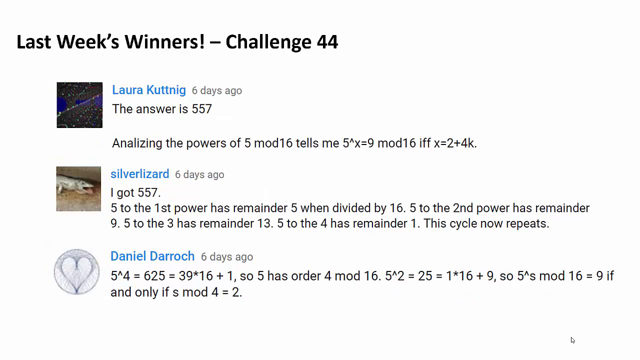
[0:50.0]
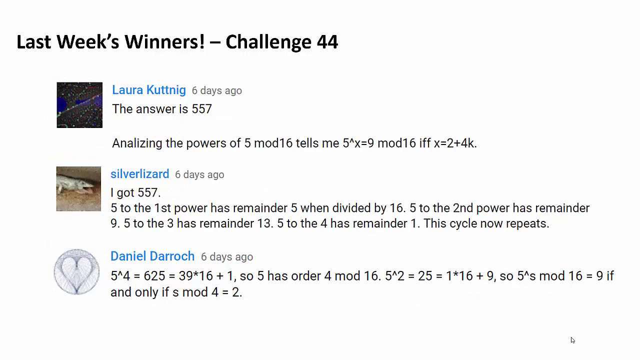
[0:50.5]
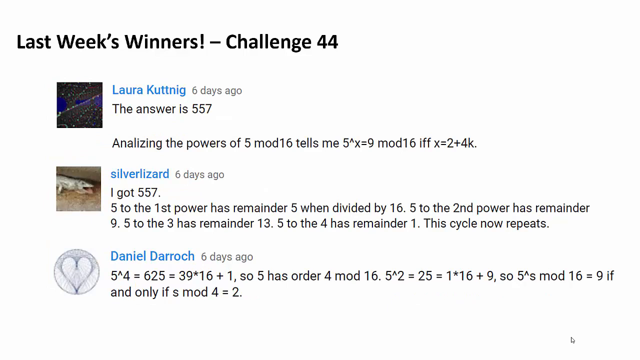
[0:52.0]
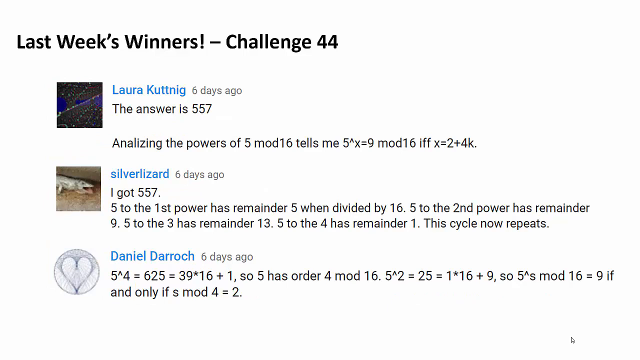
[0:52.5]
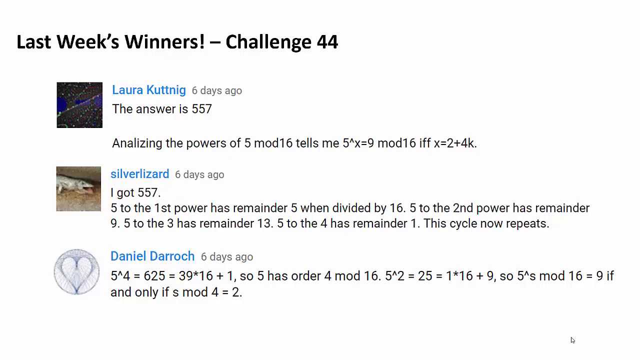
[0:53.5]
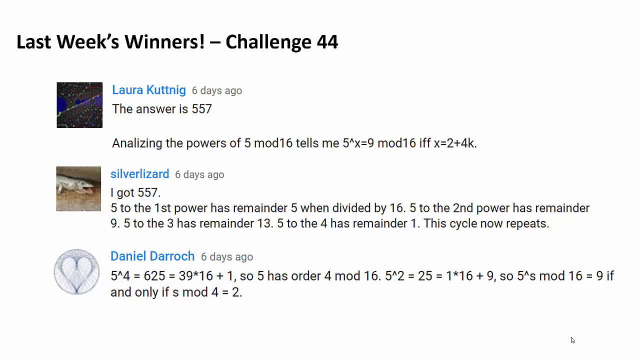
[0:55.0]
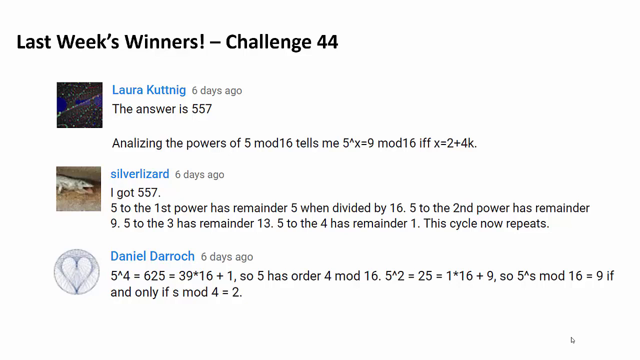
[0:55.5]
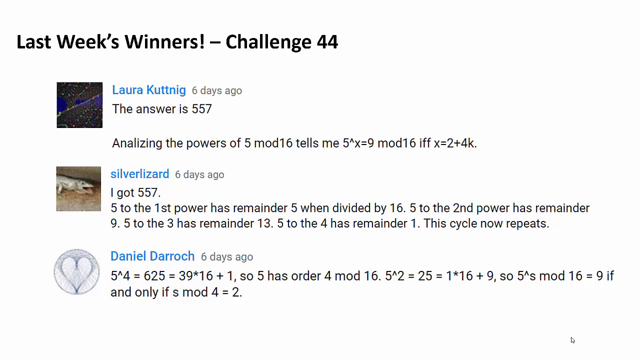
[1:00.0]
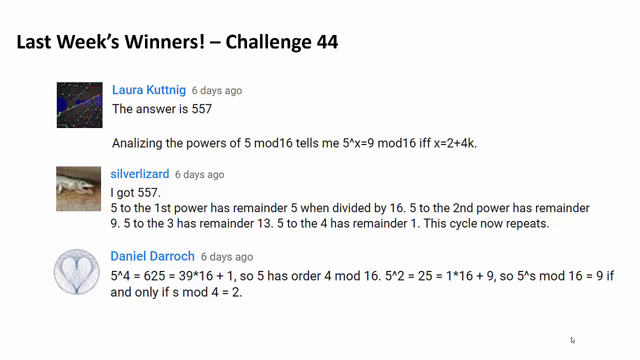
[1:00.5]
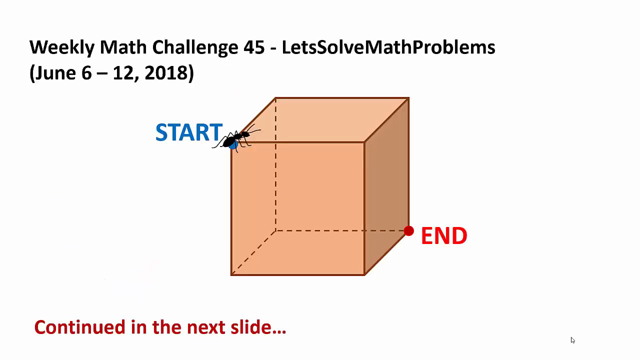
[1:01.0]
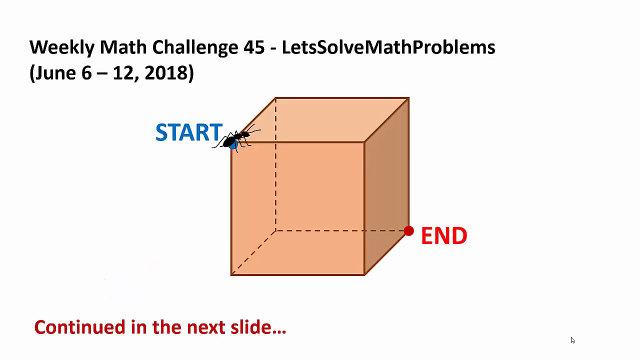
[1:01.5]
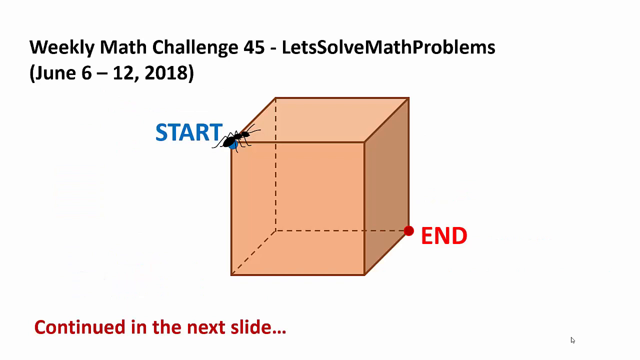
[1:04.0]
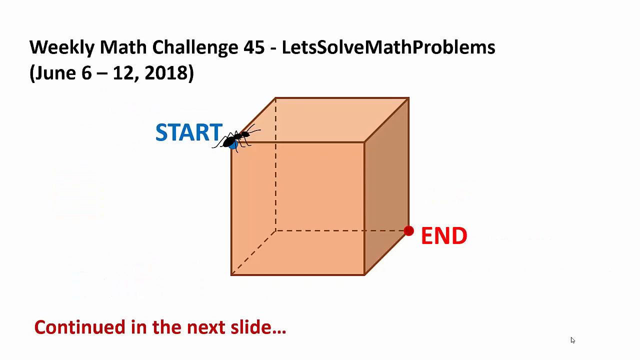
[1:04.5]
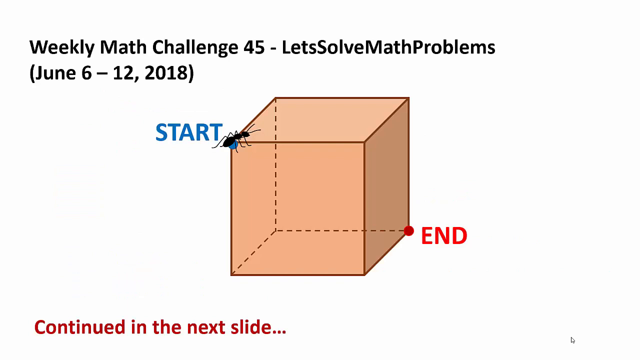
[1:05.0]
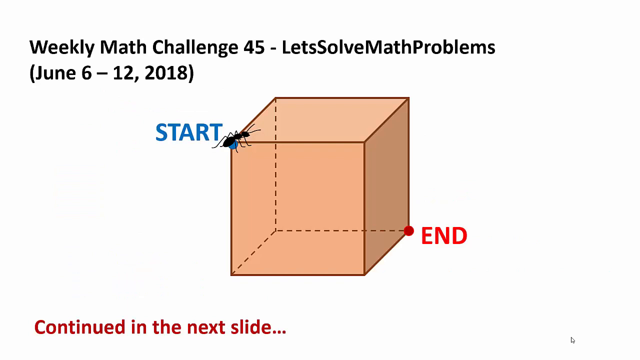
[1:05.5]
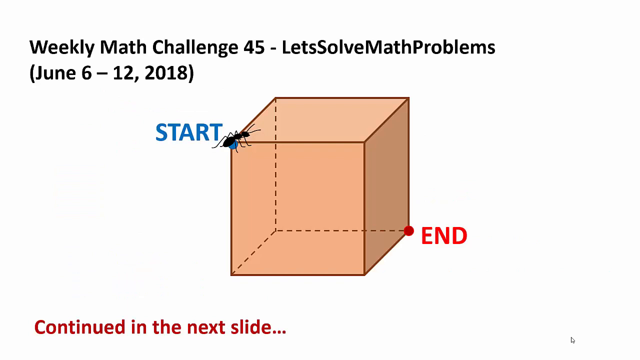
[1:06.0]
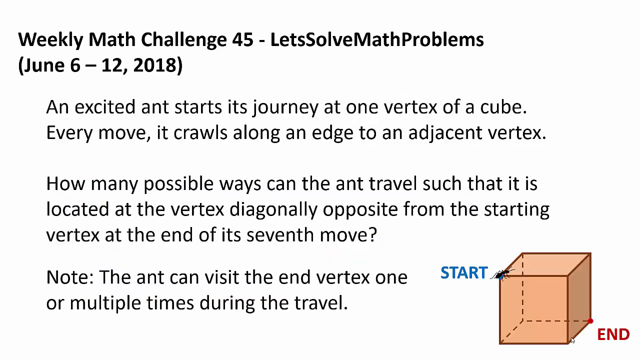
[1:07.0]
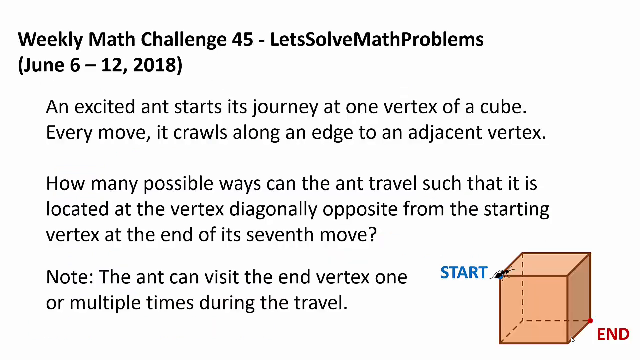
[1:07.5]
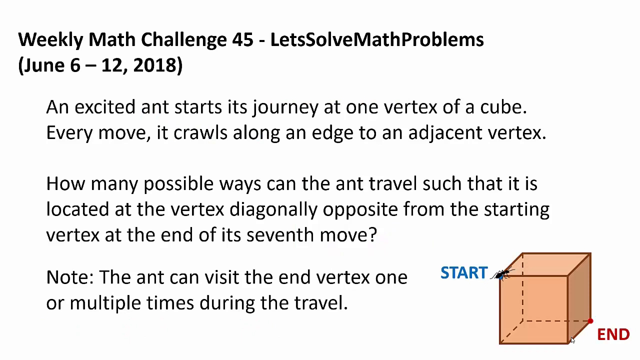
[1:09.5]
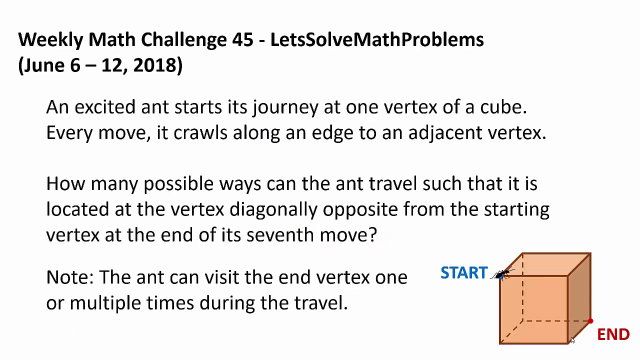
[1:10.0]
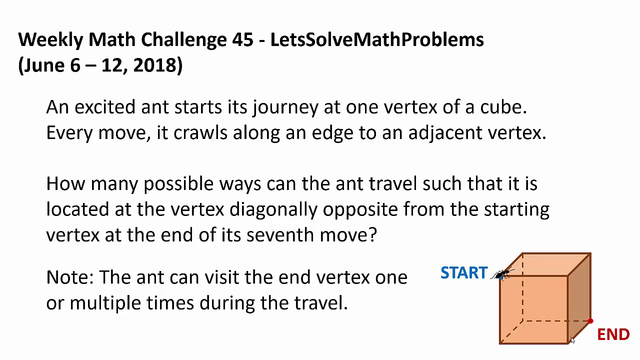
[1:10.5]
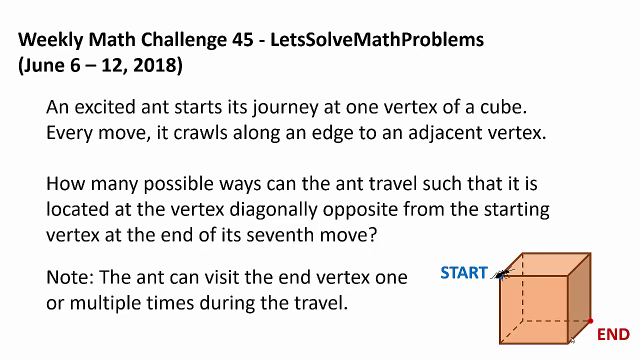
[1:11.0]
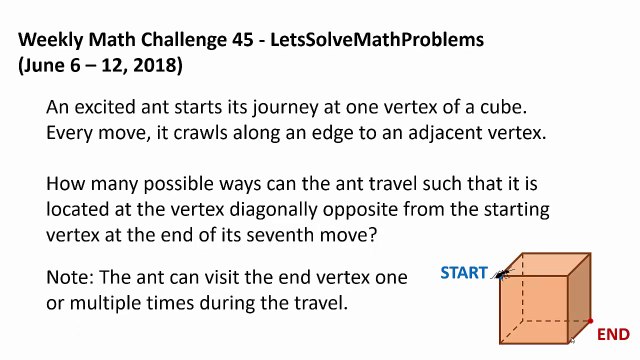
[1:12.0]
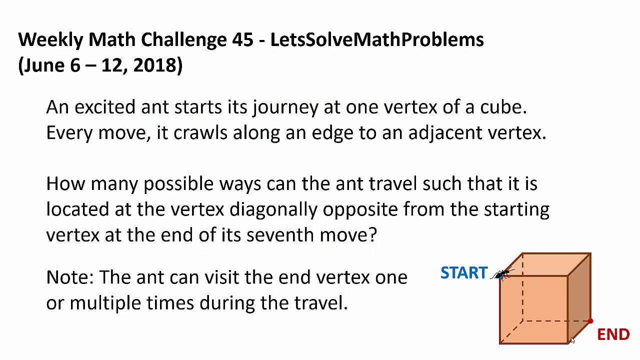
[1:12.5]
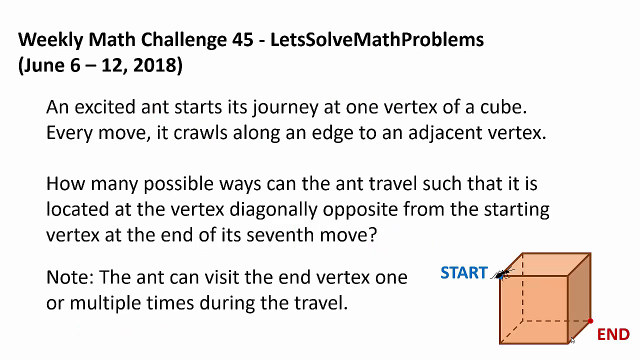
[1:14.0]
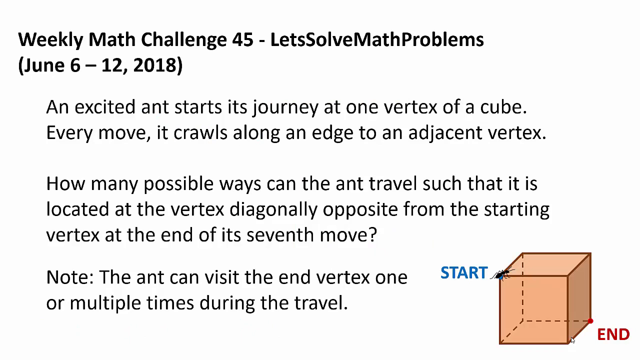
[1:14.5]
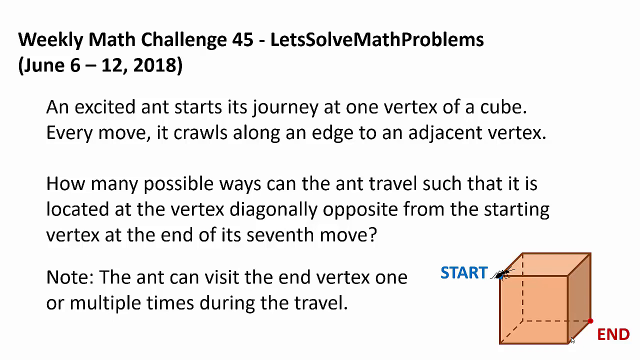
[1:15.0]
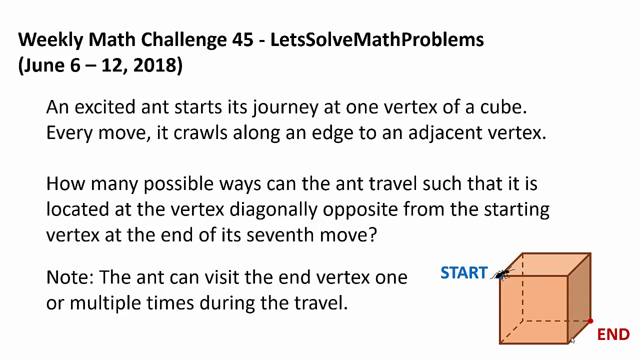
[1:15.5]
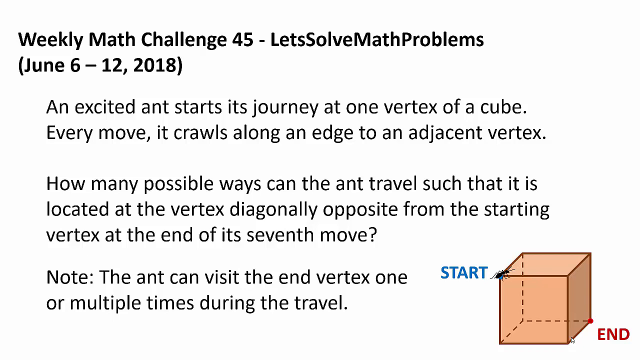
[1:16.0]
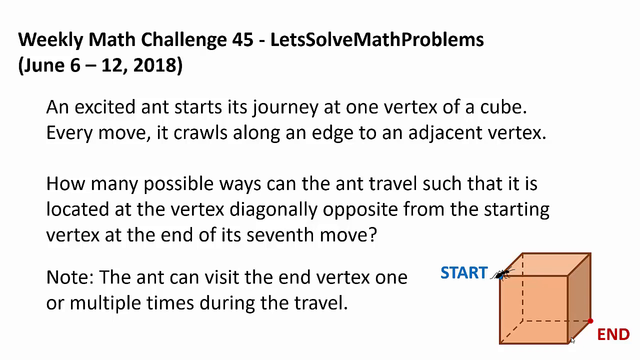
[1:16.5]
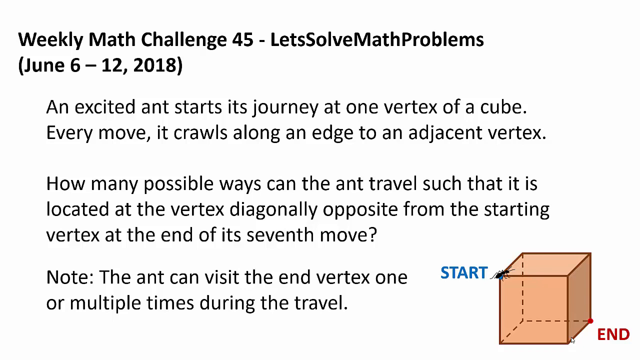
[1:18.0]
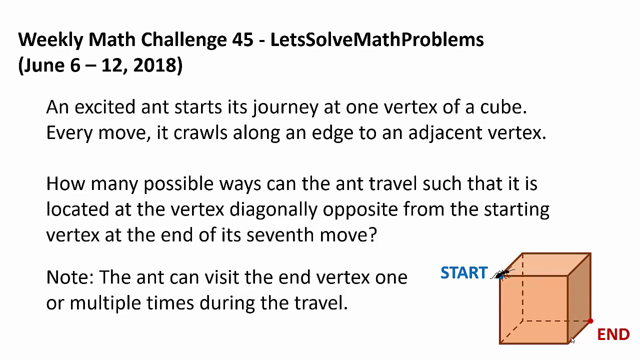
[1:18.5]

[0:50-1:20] The screen again shows last week's winners for challenge 44. Text reads "The answer is 557", "analyzing the power of five", and "I got 557", followed by working such as "5 to the first power has remainder 5 when divided by 16" and "This cycle now repeats". The screen is the same as the one before, but edited.